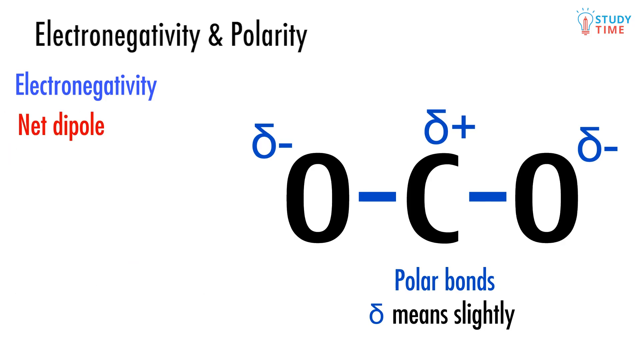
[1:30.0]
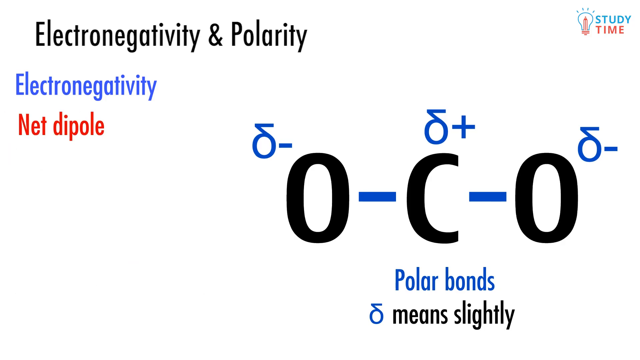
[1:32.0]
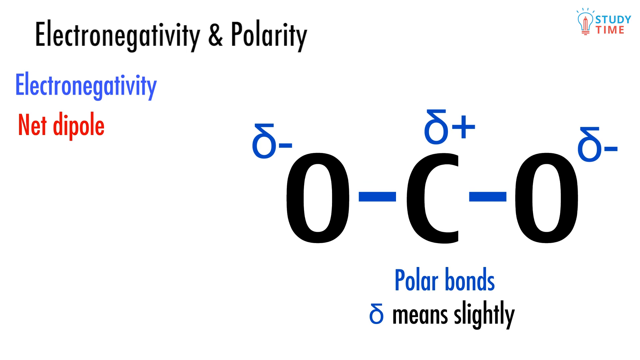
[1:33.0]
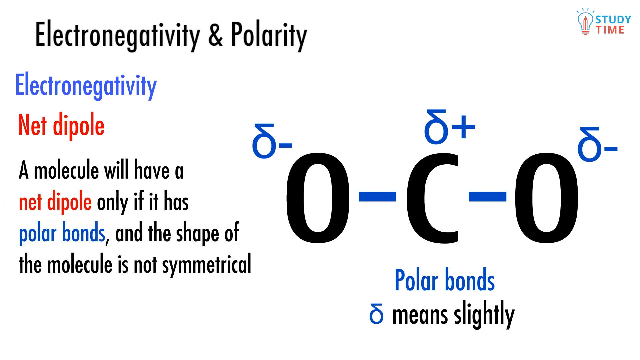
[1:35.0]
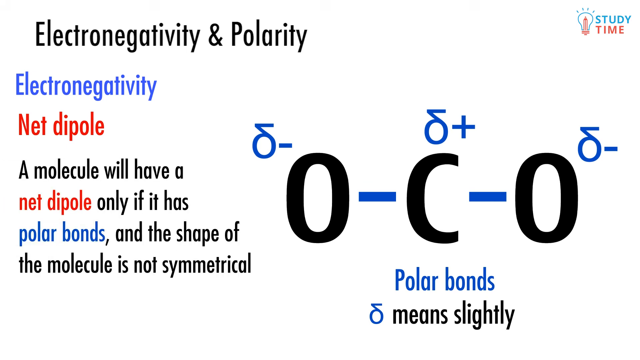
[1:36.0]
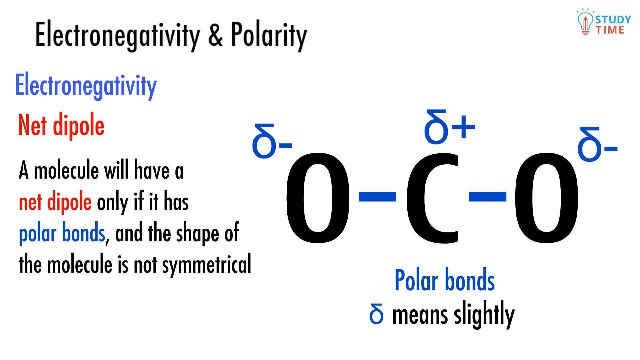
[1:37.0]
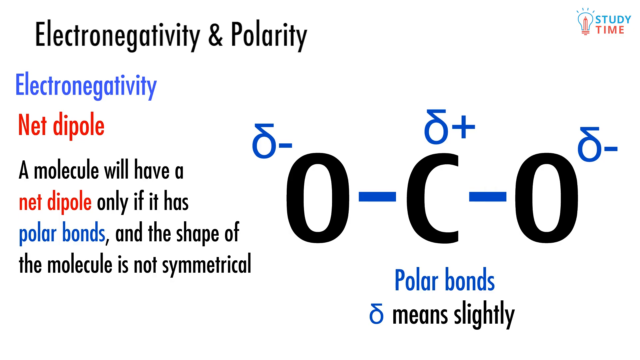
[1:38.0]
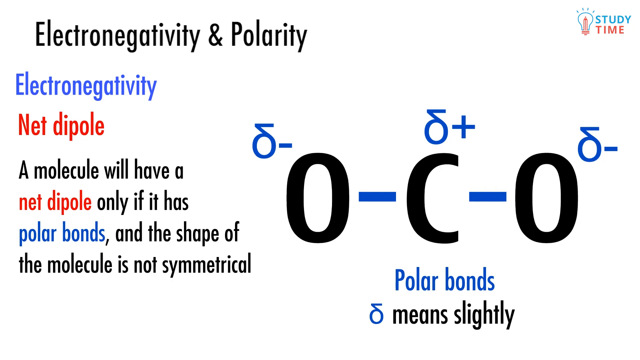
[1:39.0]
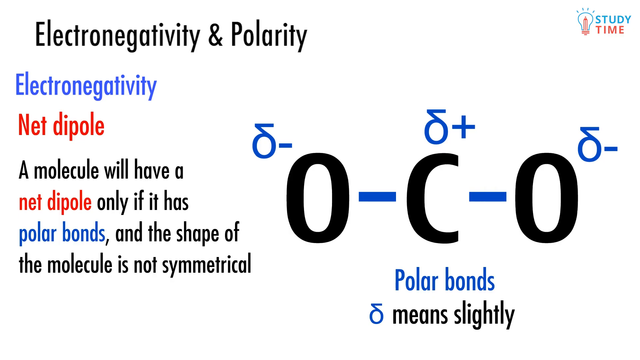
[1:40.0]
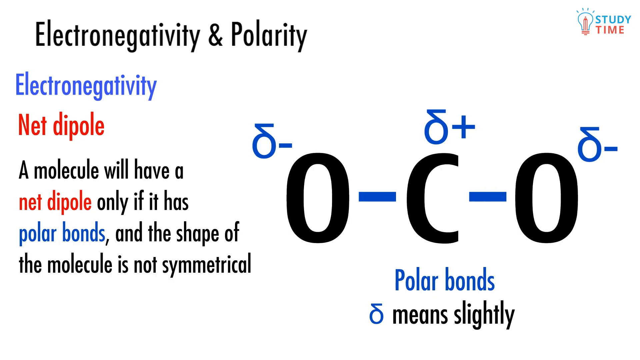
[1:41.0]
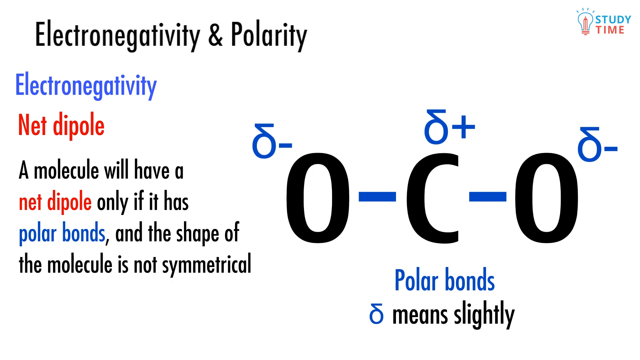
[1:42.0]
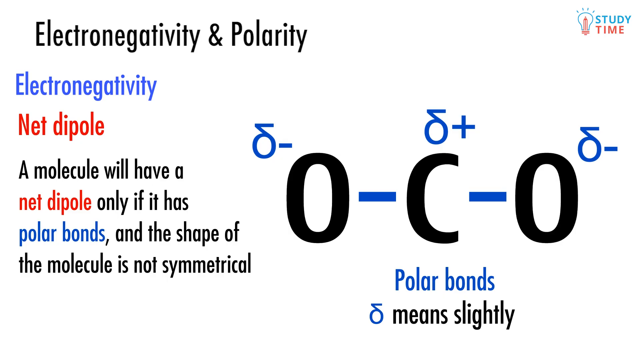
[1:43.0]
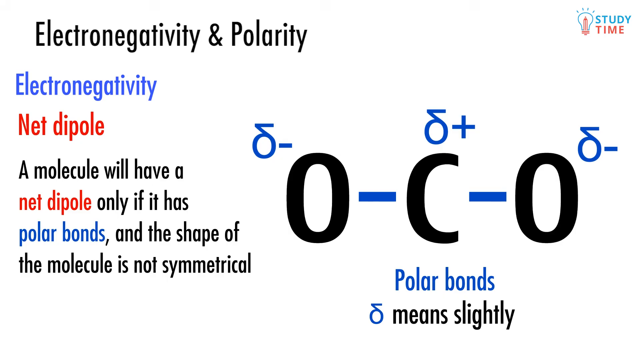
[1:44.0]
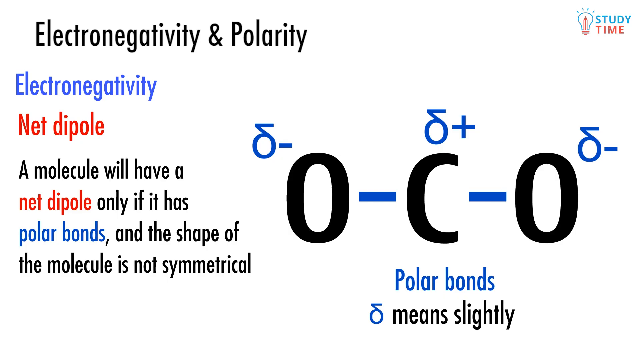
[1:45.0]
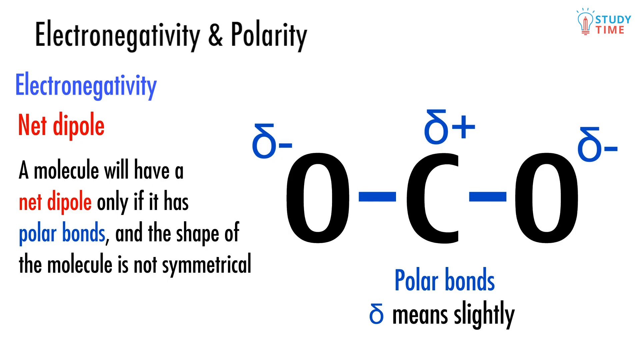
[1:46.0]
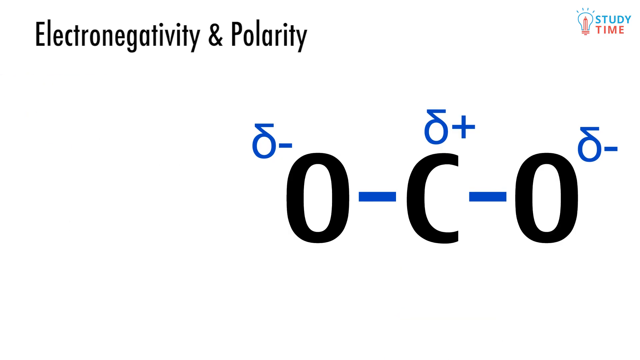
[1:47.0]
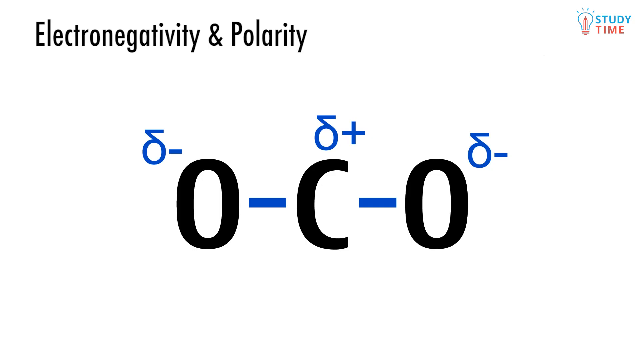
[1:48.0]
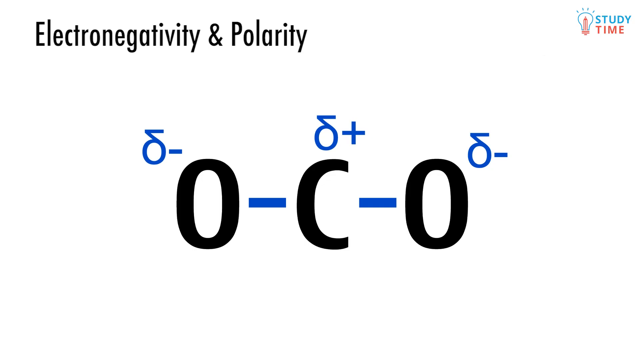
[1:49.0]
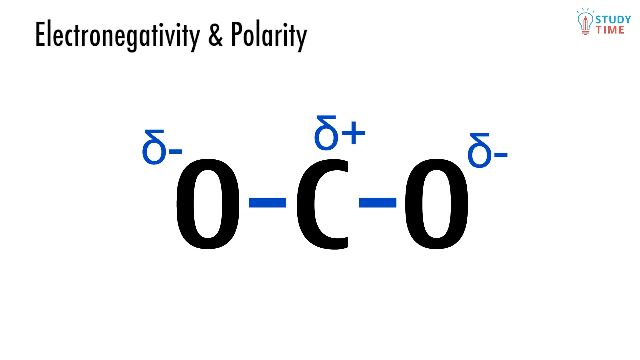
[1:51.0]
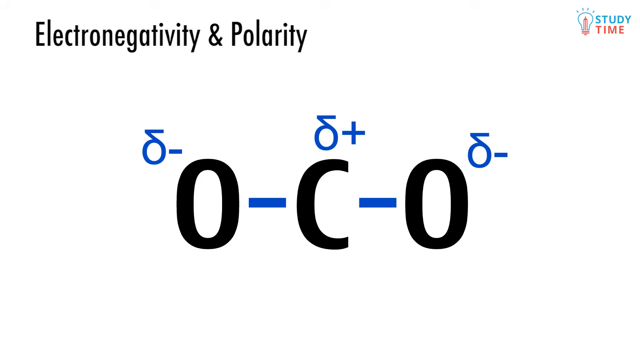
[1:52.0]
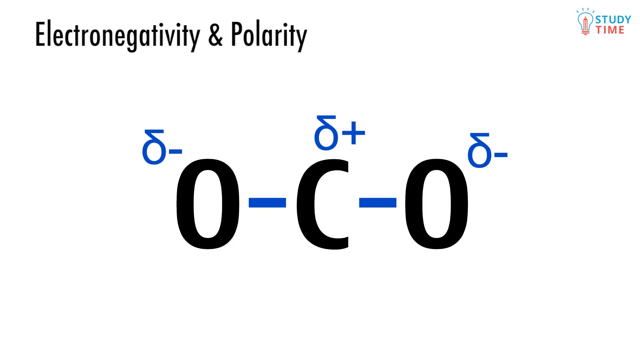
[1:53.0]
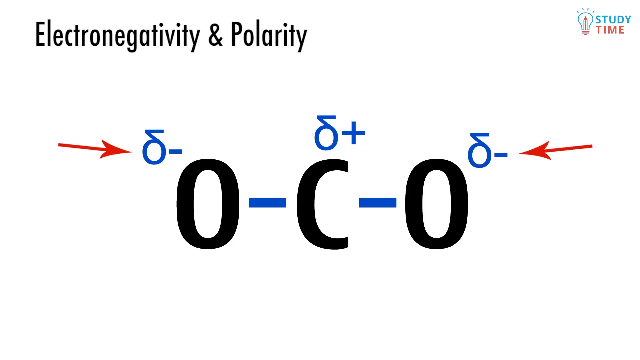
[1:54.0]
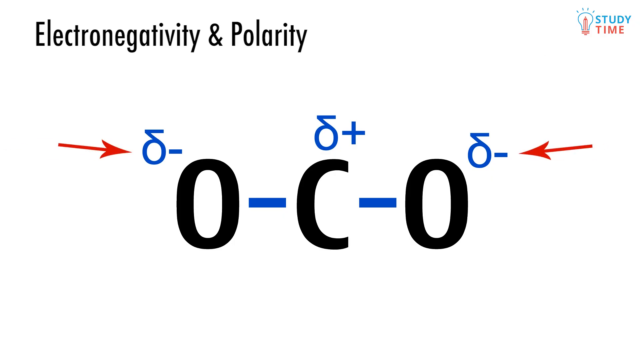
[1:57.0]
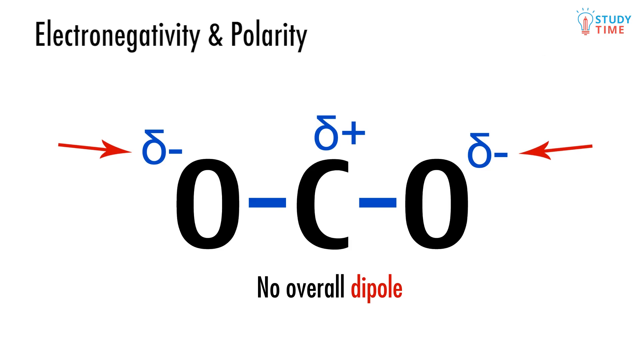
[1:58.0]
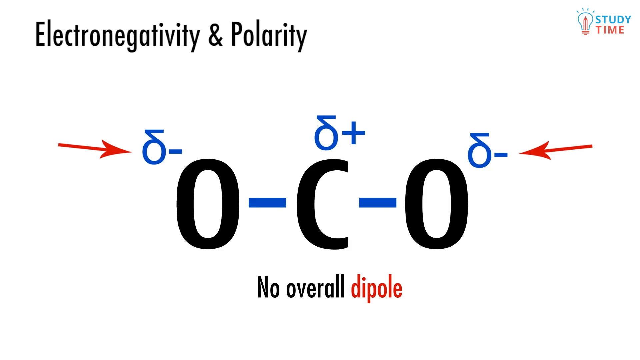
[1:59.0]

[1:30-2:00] "Net dipole" appears in red font below "electronegativity". For a moment nothing changes, but the screen is less busy because most of the text has been removed. More text then appears below, reading "a molecule will have a net dipole only if it has polar bonds" and "the shape of the molecule is not symmetrical", with the same color coding: "net dipole" in red font and "polar bonds" in blue font. The screen then stays the same for a while before shifting: the text leaves and the elements move to the center, where the molecule appears with its polar bond symbols and "slightly" symbols, marked slightly negative, slightly positive, slightly negative.